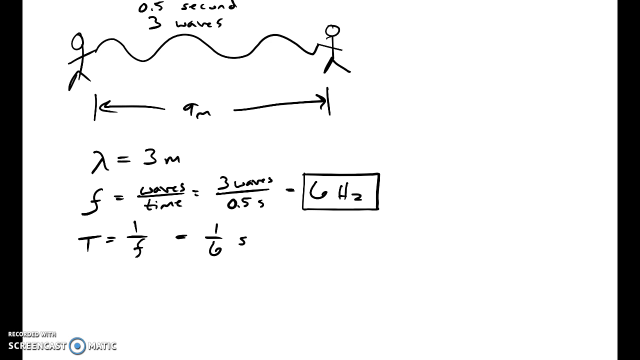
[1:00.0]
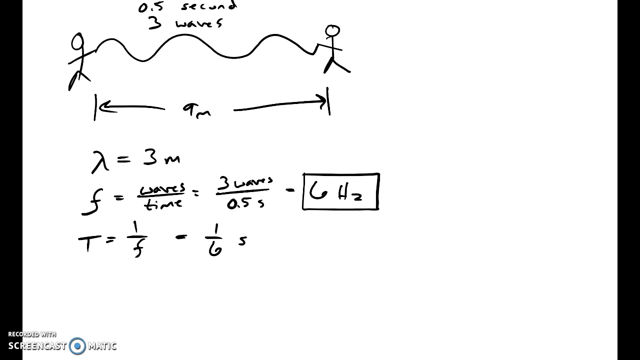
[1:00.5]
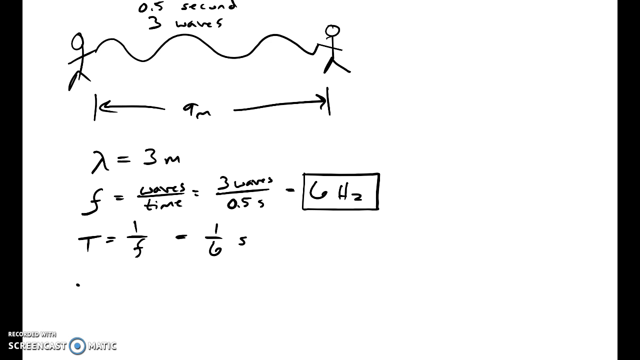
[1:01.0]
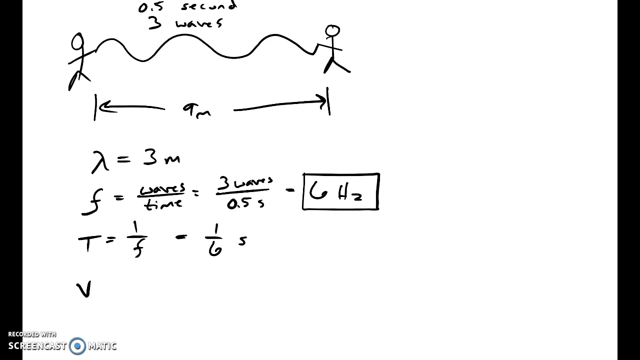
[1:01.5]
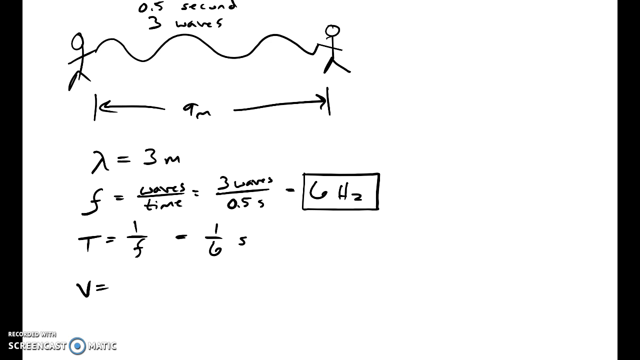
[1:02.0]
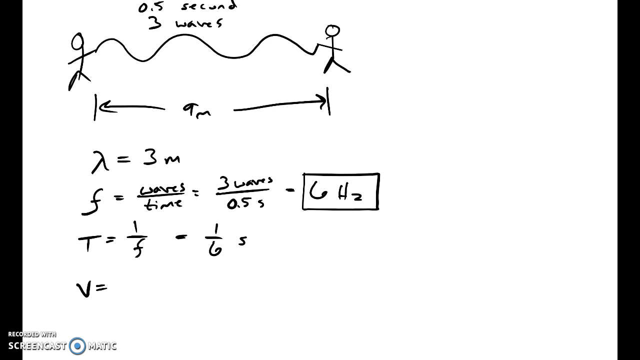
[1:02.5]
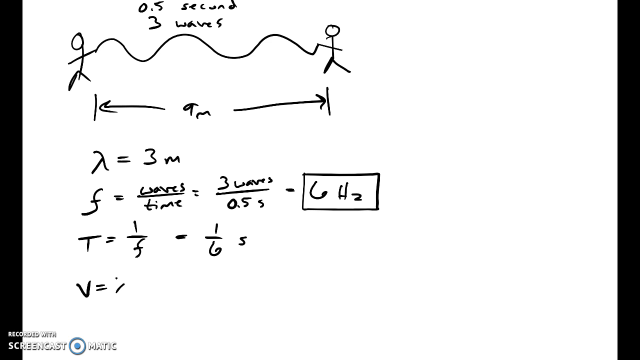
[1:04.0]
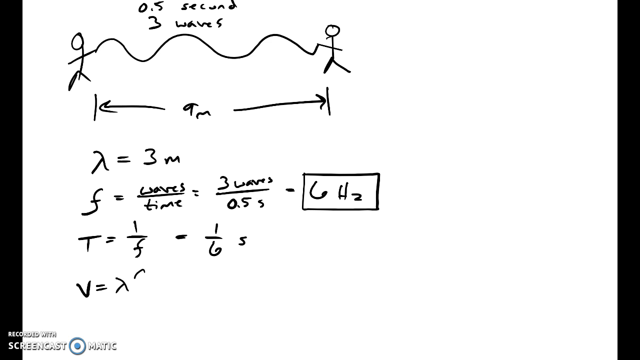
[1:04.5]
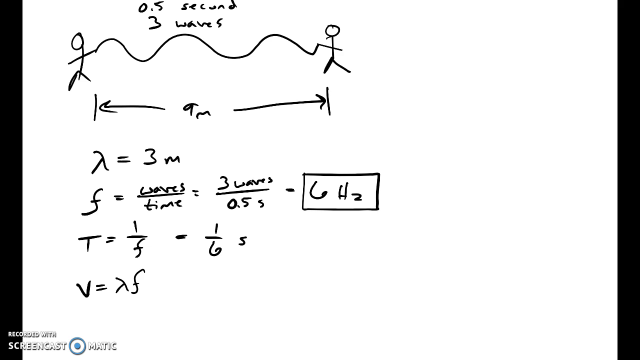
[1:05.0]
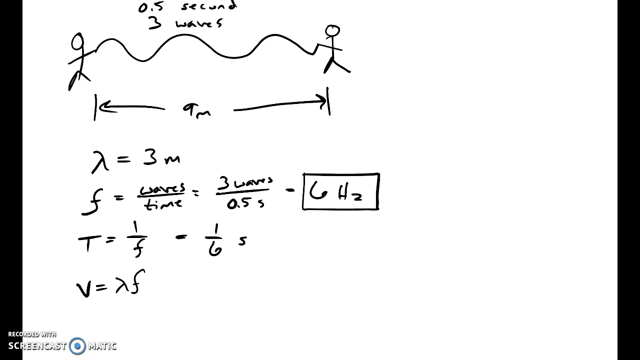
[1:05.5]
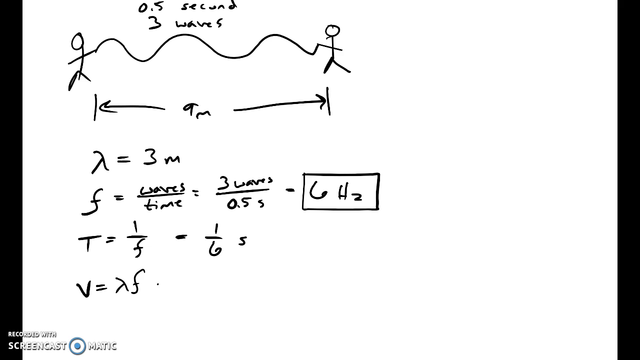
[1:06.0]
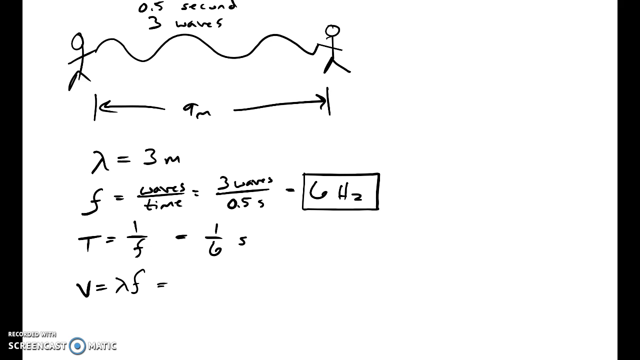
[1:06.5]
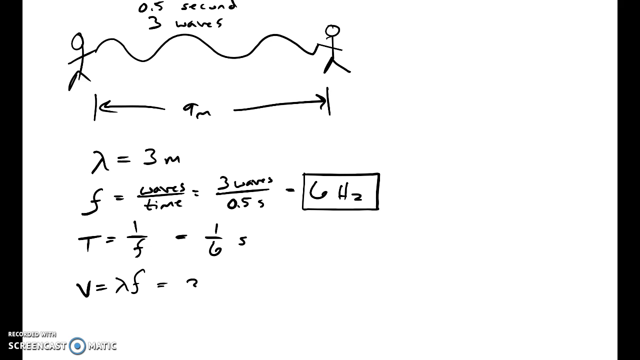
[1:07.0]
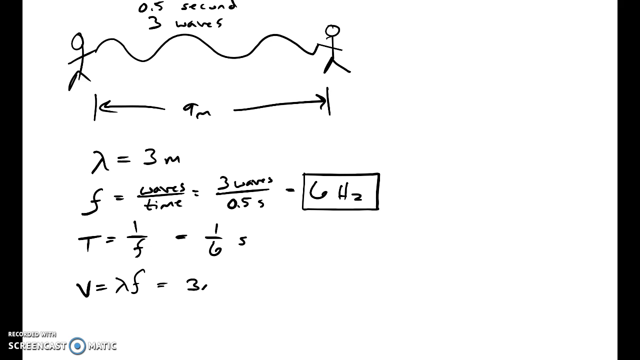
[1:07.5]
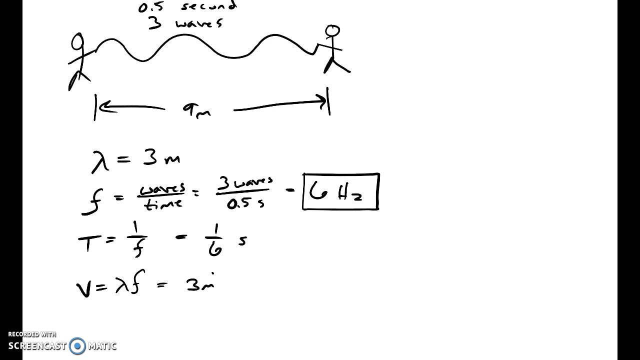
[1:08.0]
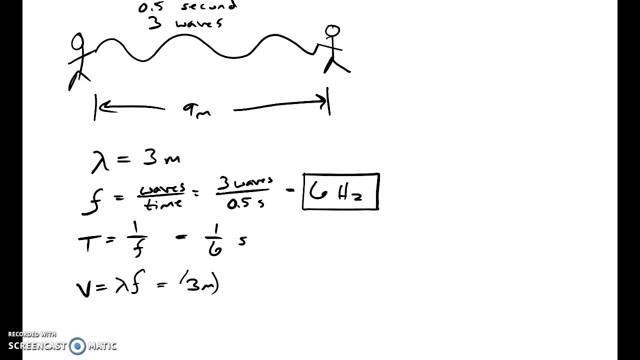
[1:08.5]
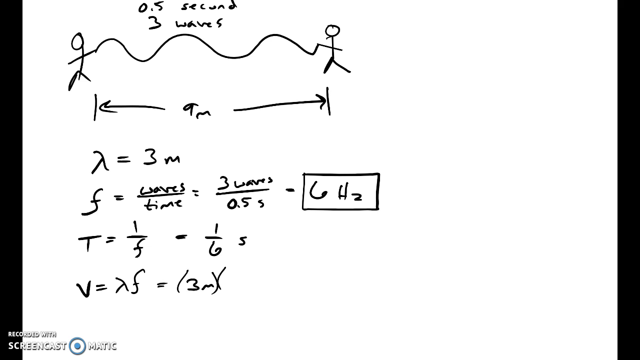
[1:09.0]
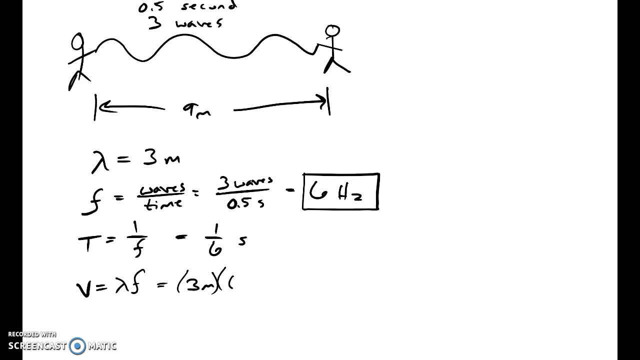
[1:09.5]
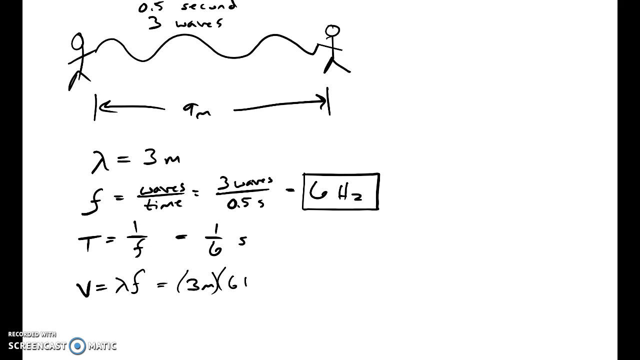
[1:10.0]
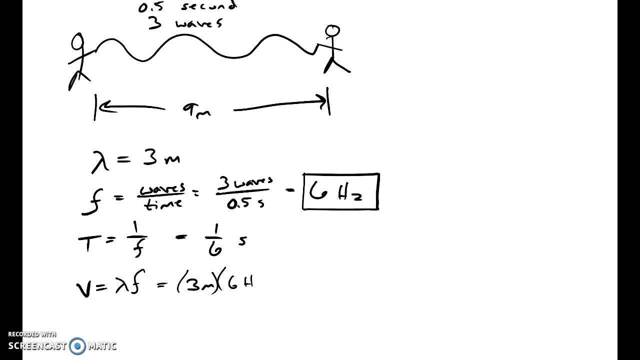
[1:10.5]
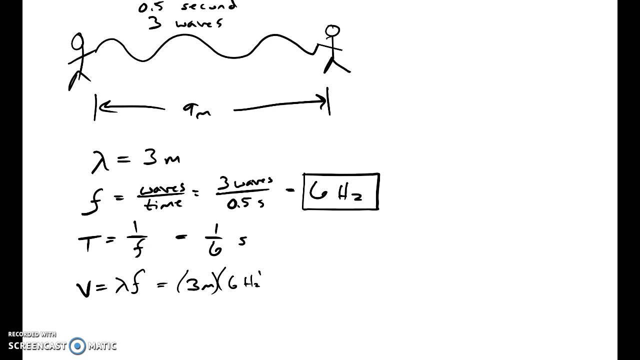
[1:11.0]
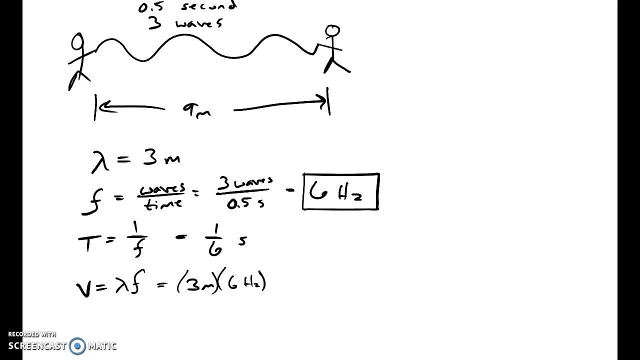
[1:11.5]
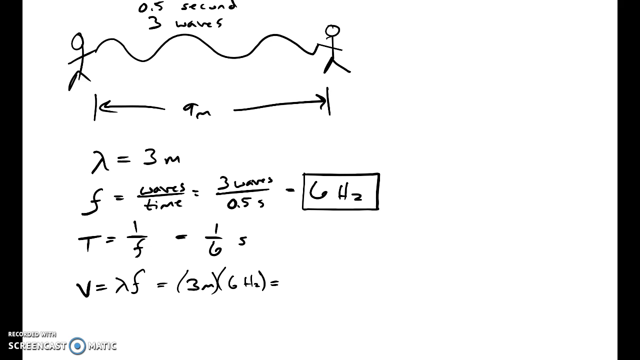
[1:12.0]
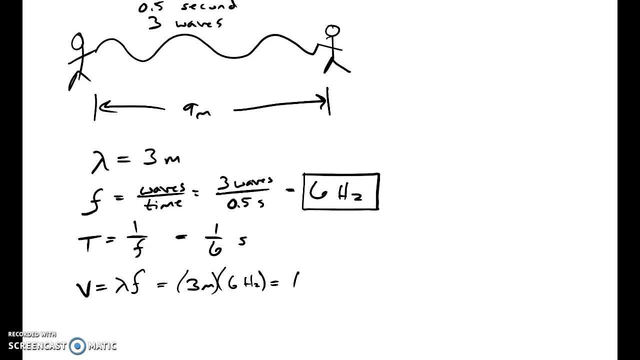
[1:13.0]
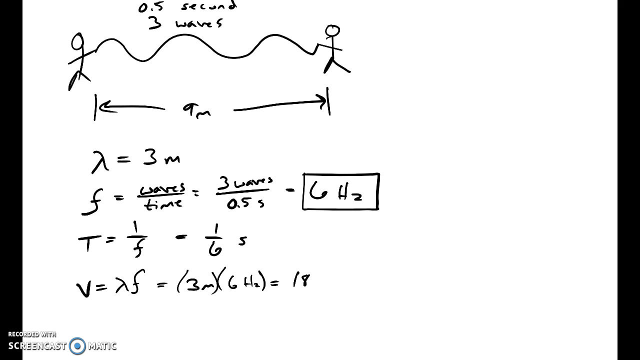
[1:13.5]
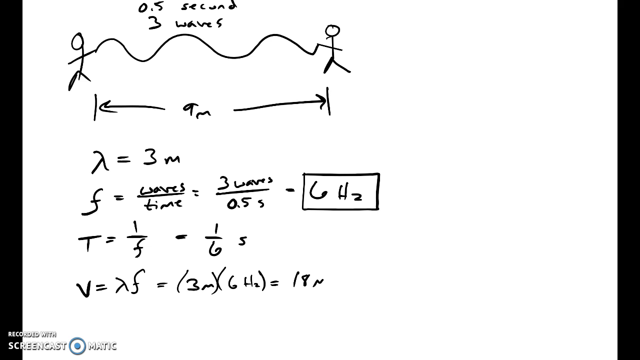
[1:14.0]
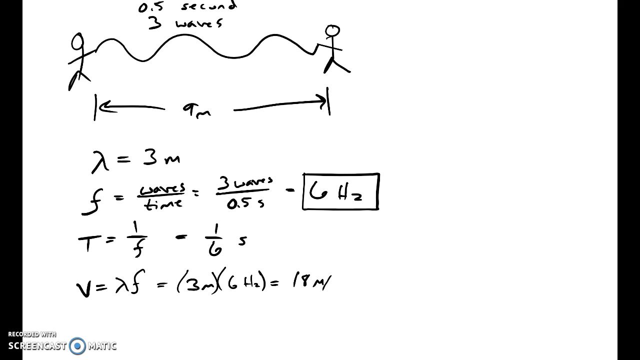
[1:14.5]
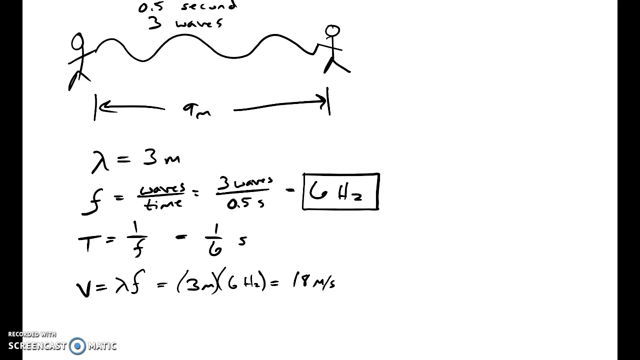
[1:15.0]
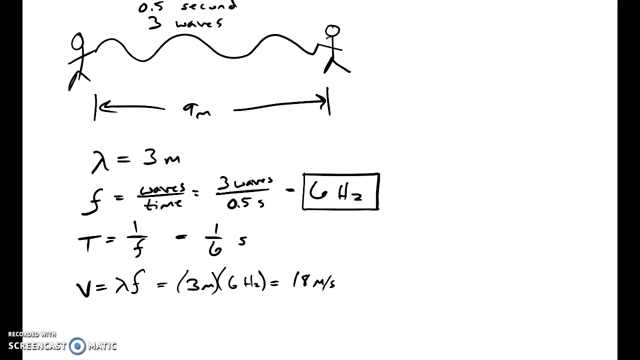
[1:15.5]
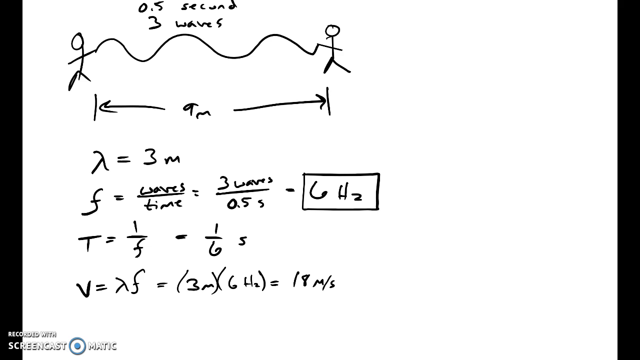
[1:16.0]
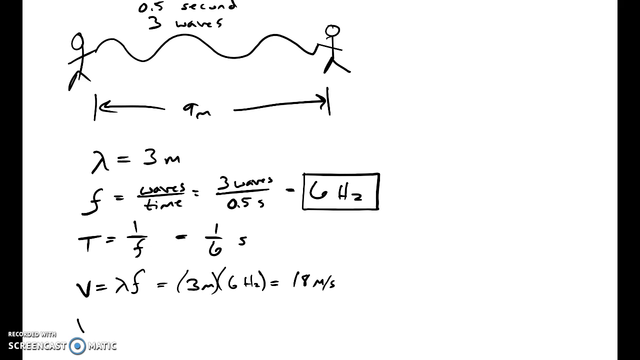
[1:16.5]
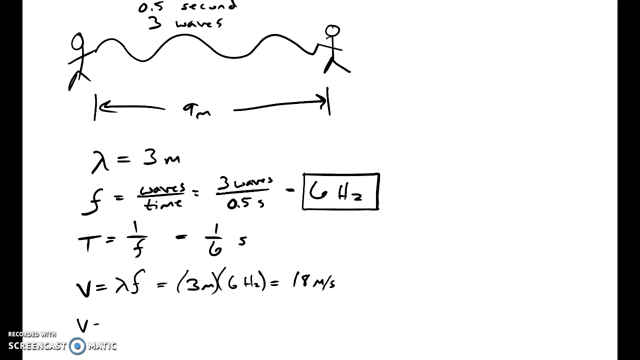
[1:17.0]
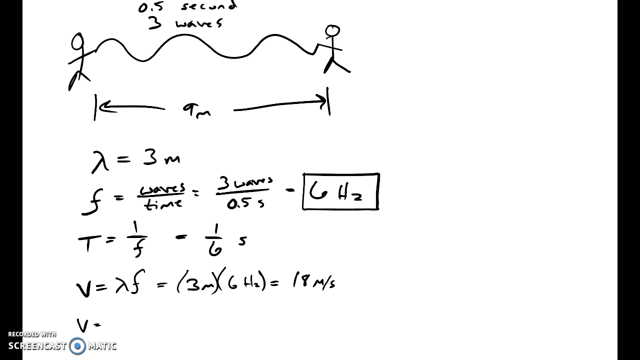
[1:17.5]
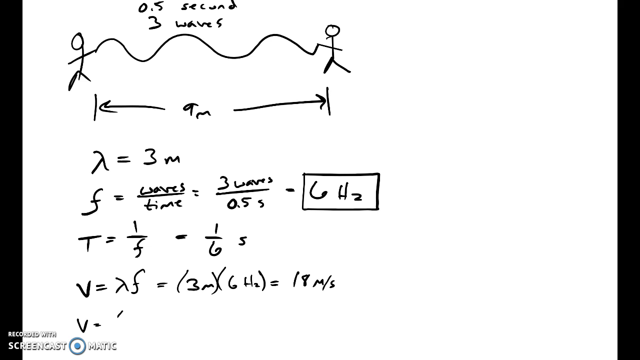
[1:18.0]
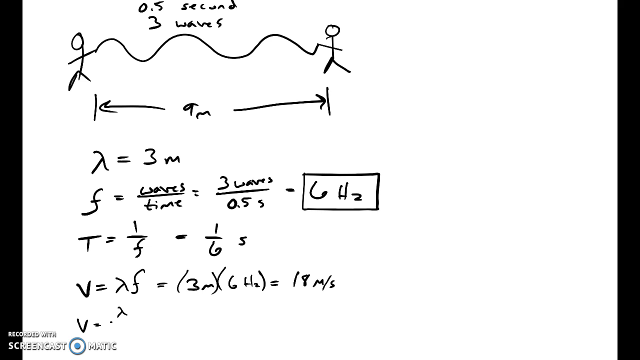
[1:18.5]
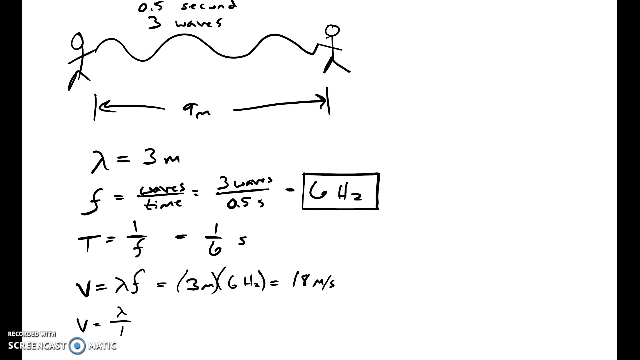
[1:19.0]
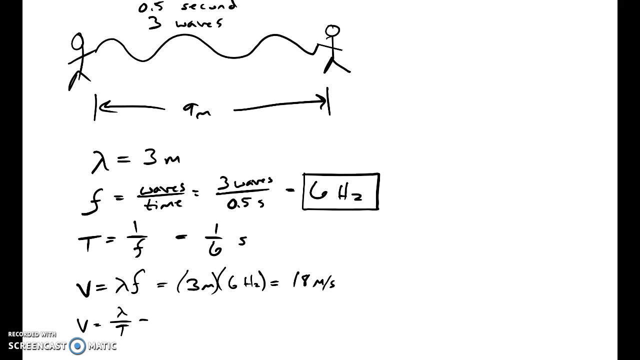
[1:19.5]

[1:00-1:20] On the same screen with all the formulas, someone starts writing V equals something below the last formula, T equals 1 over F equals 1 over 6 s. The next part is some sort of X with an f next to it, unclear. Then "3m" is written in black in parentheses, followed by "6" and "HZ" in parentheses. That equals 18, written in black, and then "m/s" is written, also in black. The writing is smooth and nothing is blurry, like someone writing on a piece of paper. Below that, someone else starts another formula: V with 2 over T. What it equals is not visible.